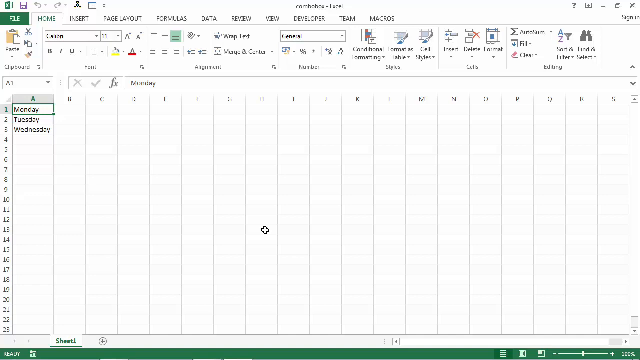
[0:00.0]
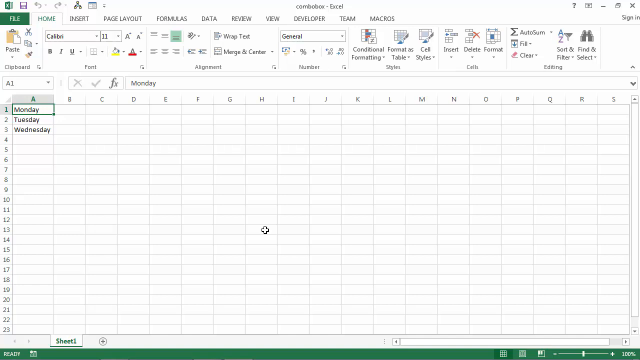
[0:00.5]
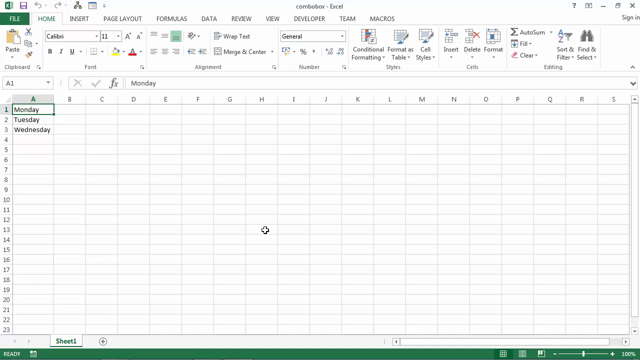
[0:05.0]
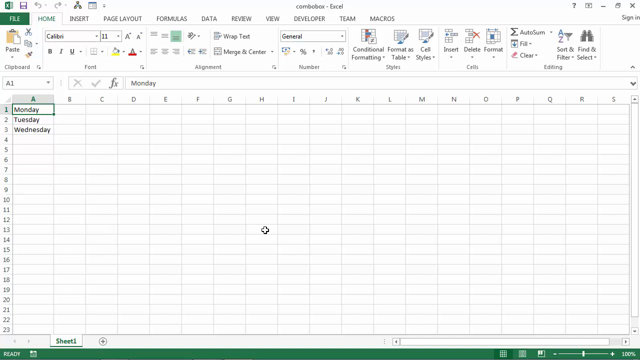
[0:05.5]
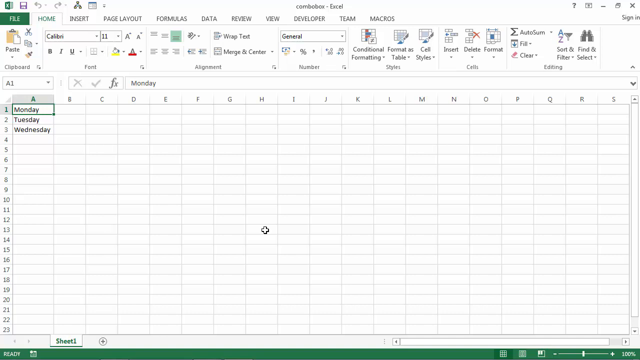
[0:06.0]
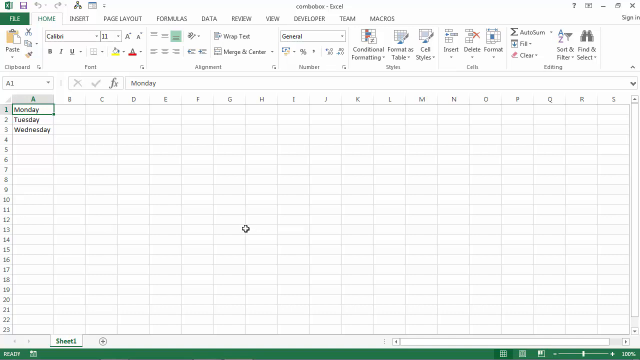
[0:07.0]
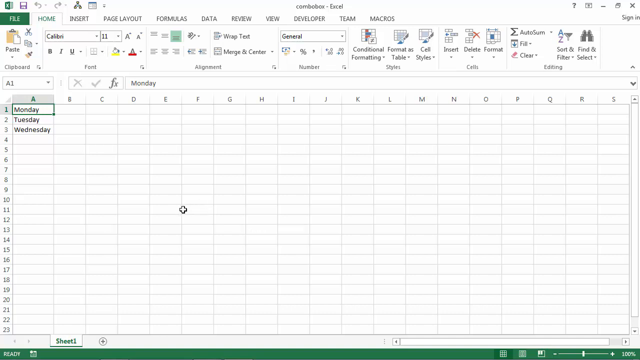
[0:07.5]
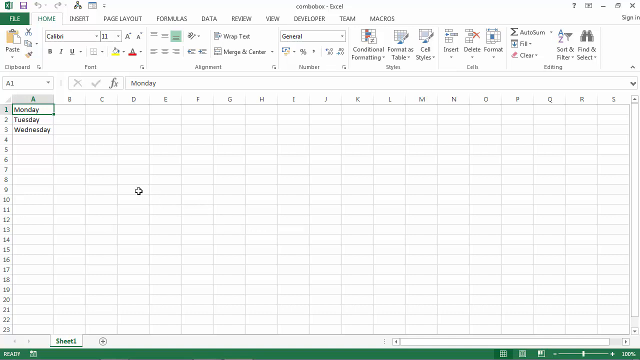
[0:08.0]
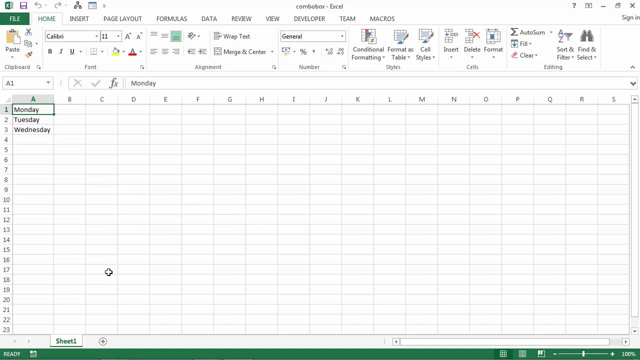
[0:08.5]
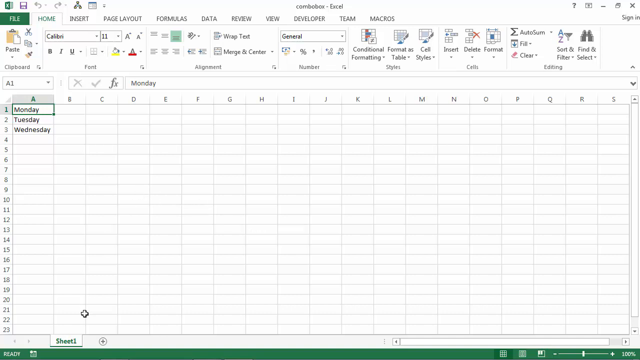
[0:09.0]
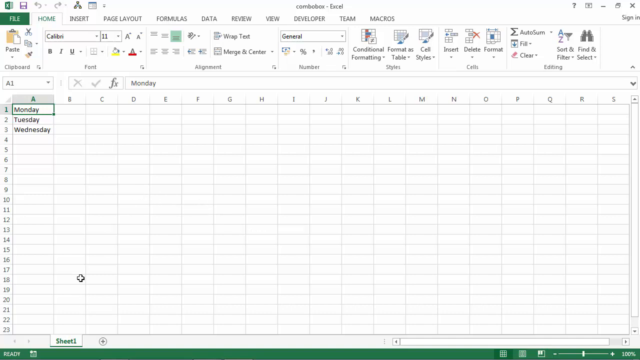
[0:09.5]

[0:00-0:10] A spreadsheet, apparently Excel, is shown. Across the top are the tabs Home, Insert, Page Layout, Formulas, Data, Review, View, Developer, Team and Macros. There is a save button that looks like a floppy disk, along with undo and redo buttons, the font and font size, increase and decrease font size, bold, italics and underline, and font color. Below are the rows and columns, with some text entered: Monday, Tuesday, Wednesday.